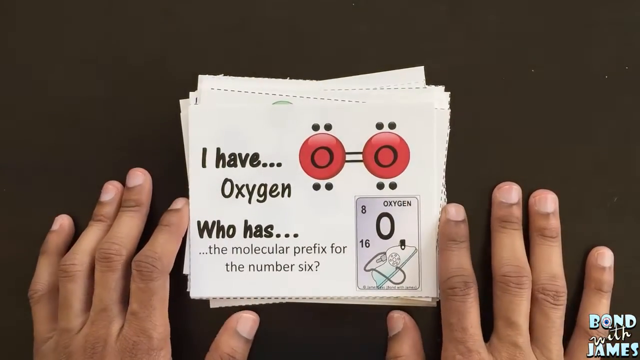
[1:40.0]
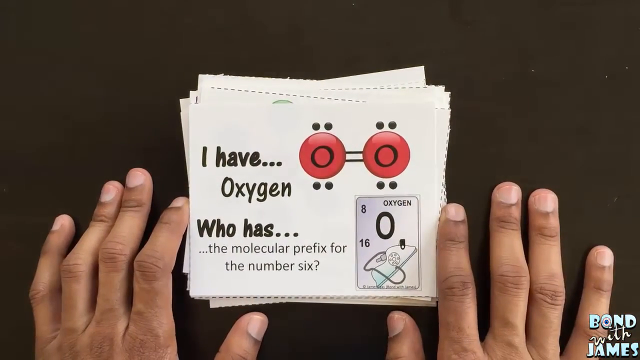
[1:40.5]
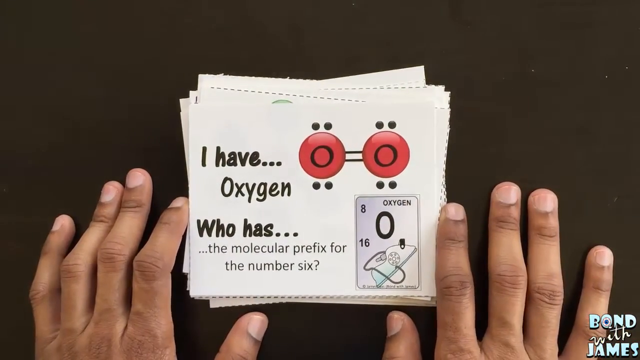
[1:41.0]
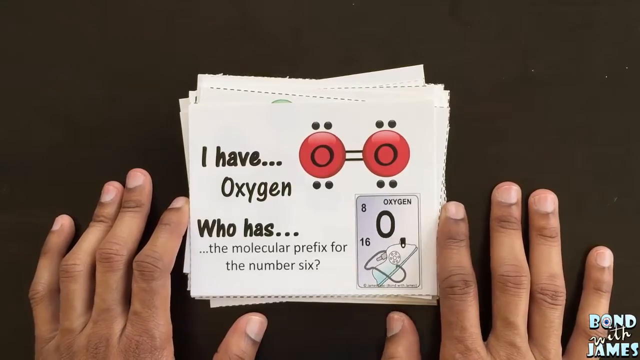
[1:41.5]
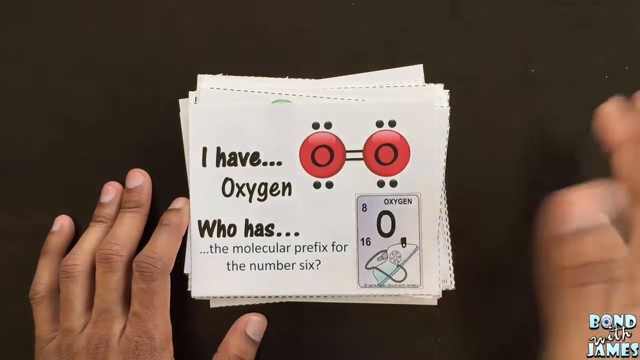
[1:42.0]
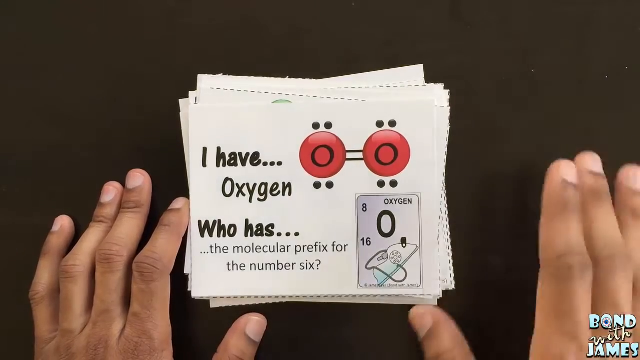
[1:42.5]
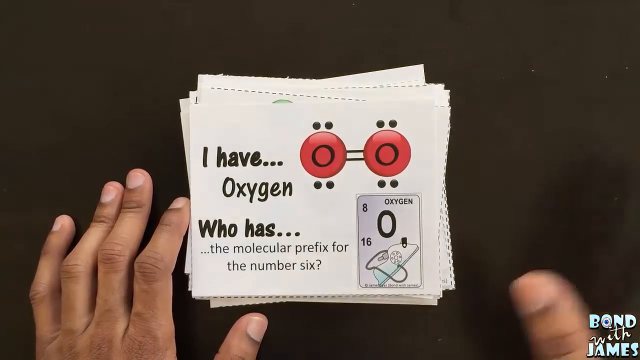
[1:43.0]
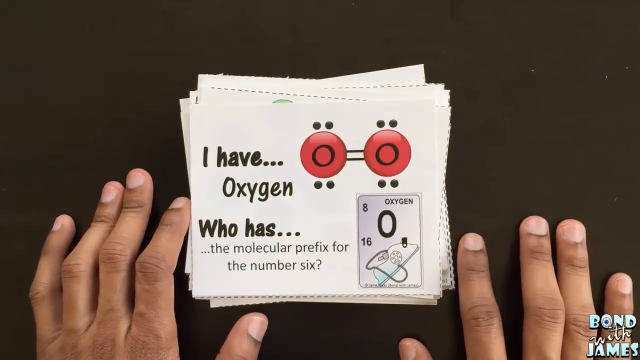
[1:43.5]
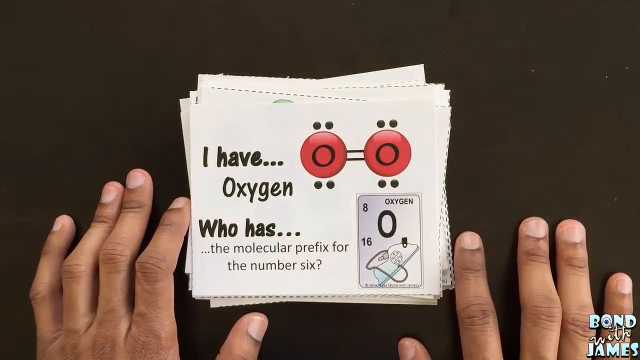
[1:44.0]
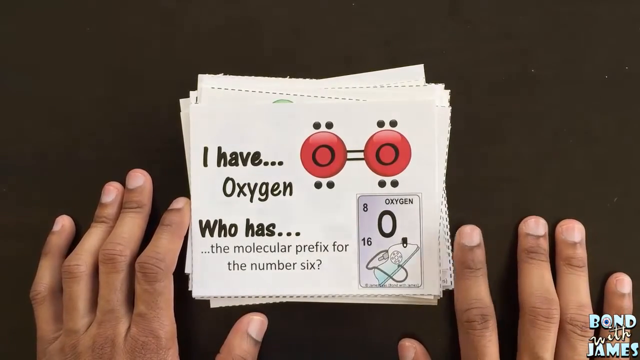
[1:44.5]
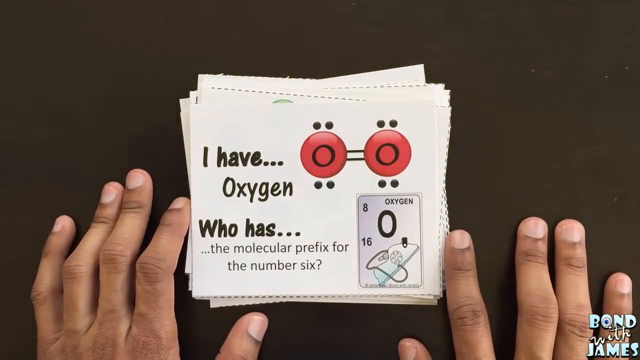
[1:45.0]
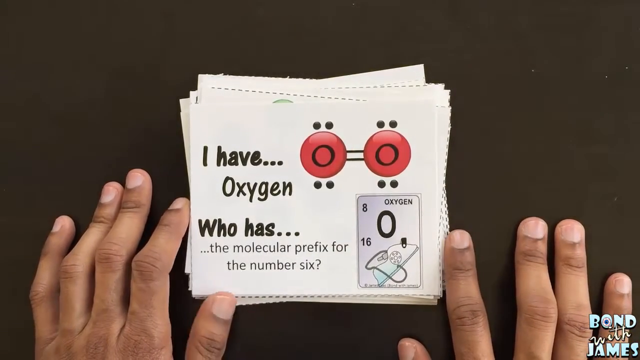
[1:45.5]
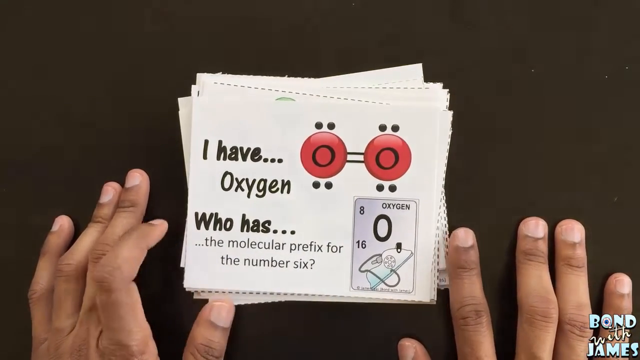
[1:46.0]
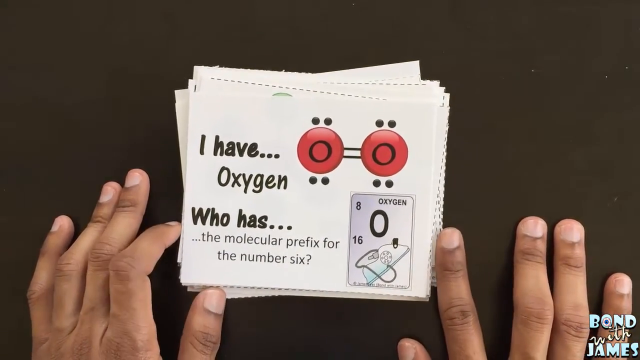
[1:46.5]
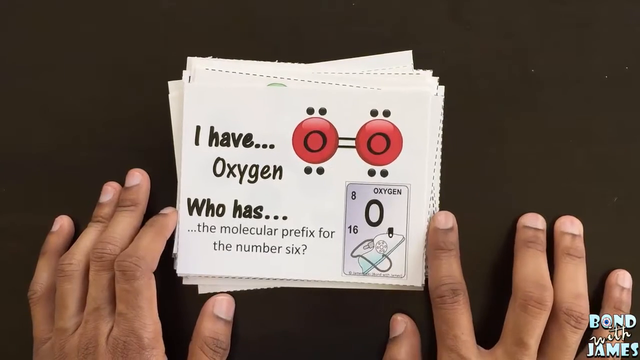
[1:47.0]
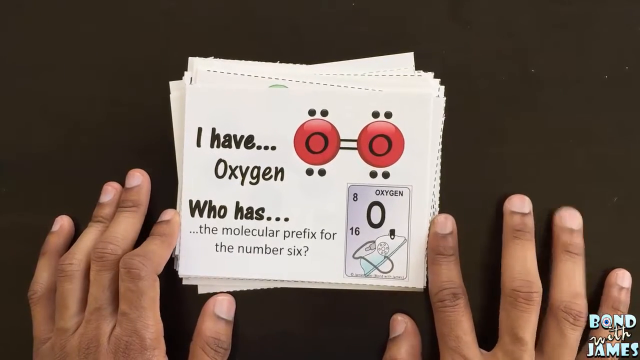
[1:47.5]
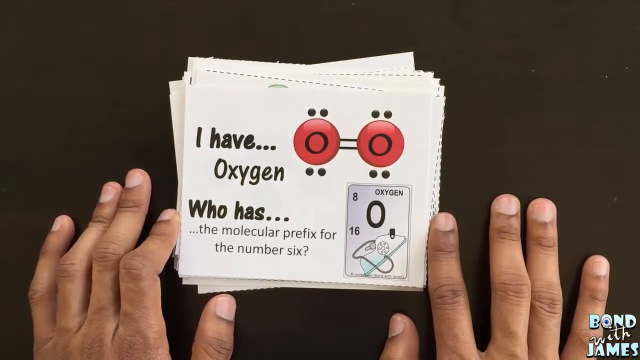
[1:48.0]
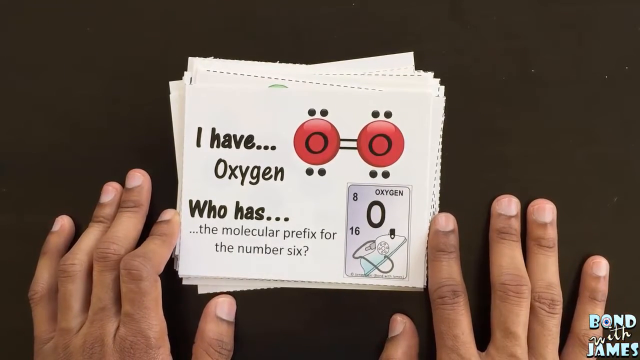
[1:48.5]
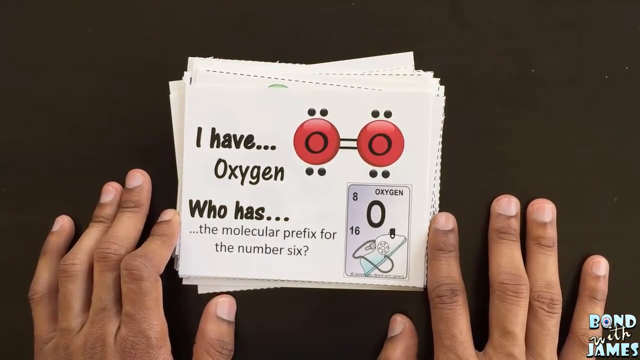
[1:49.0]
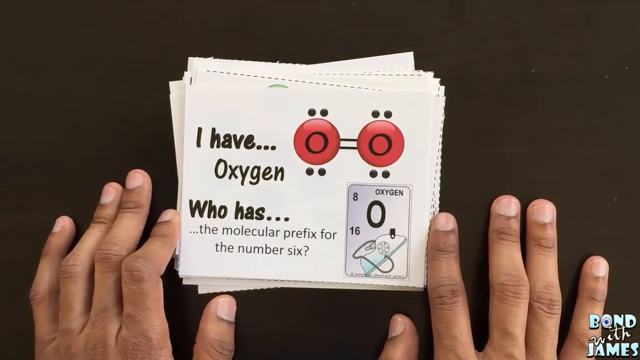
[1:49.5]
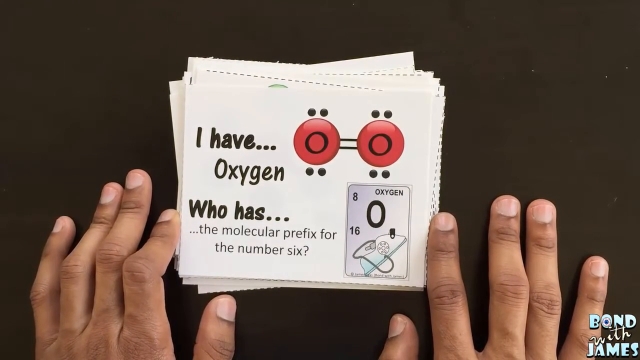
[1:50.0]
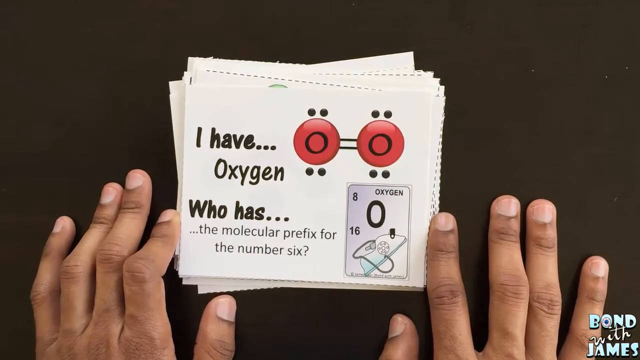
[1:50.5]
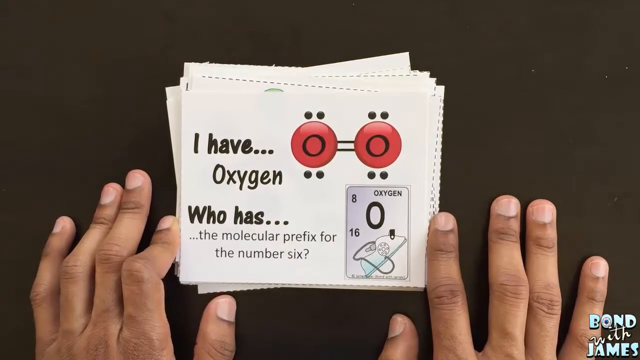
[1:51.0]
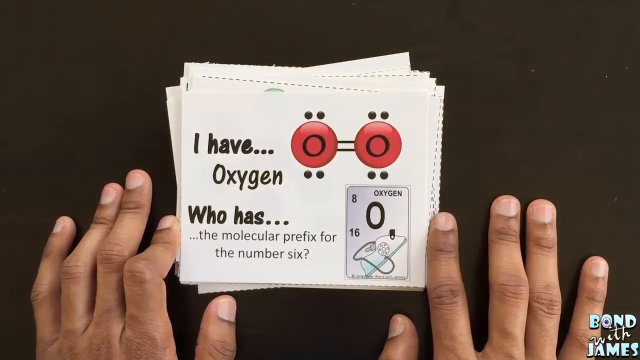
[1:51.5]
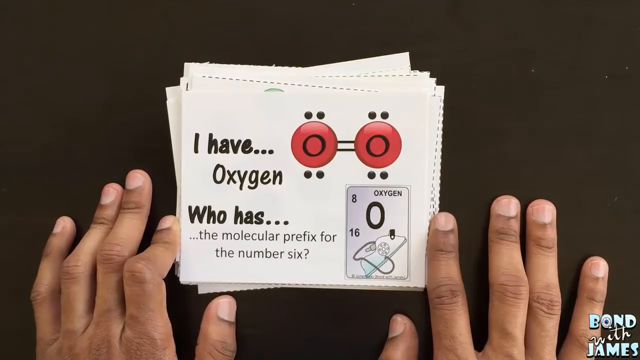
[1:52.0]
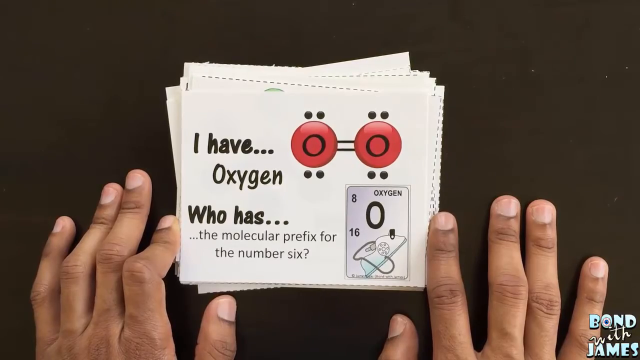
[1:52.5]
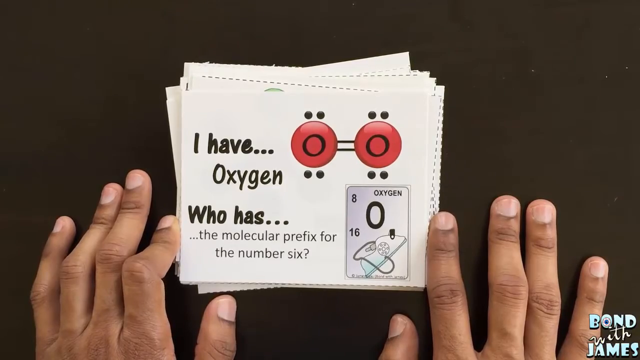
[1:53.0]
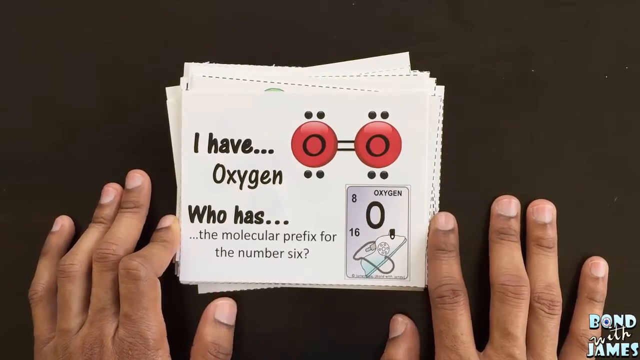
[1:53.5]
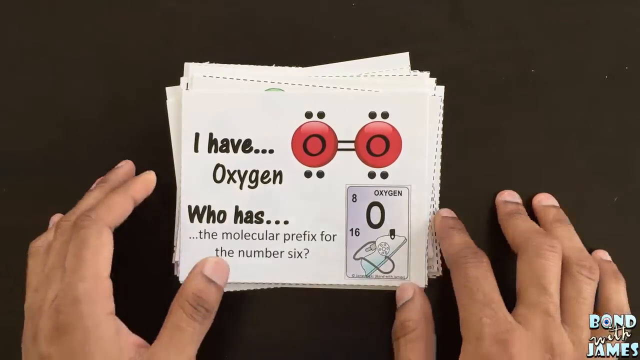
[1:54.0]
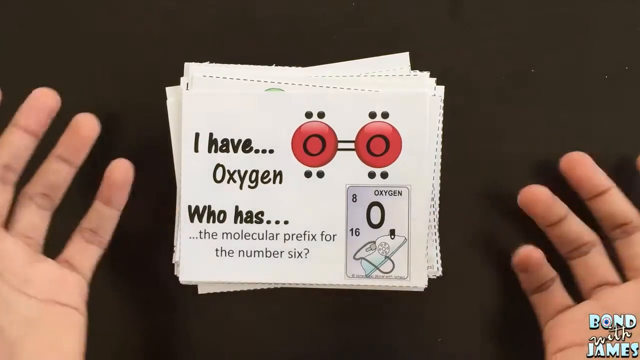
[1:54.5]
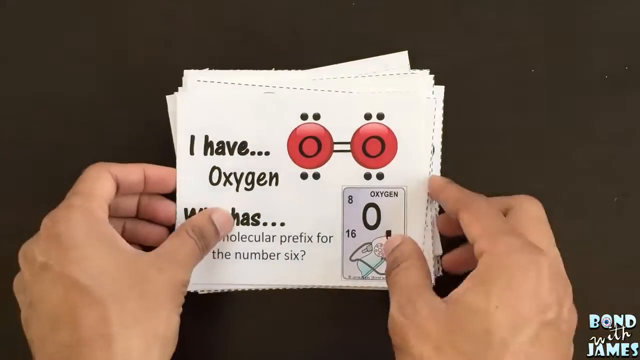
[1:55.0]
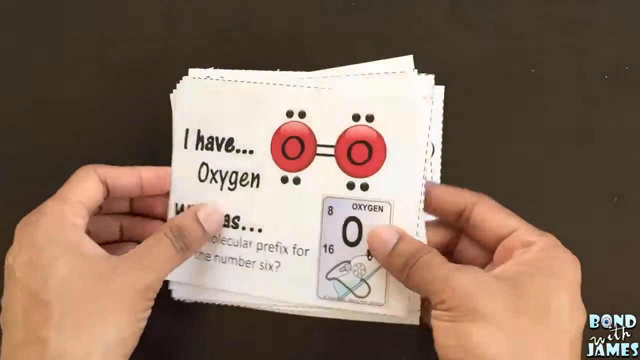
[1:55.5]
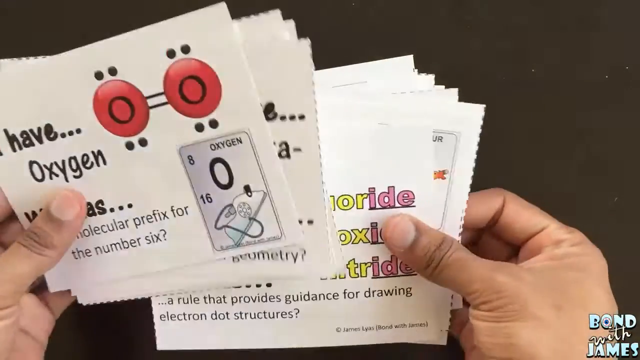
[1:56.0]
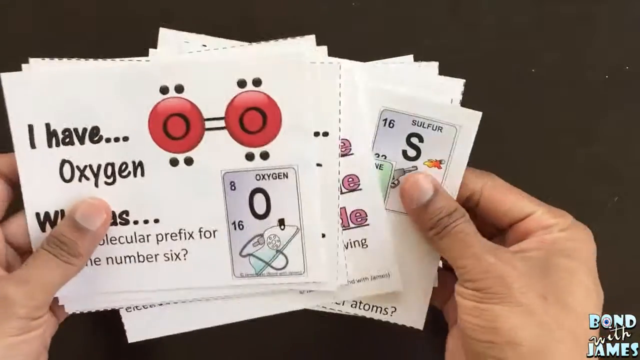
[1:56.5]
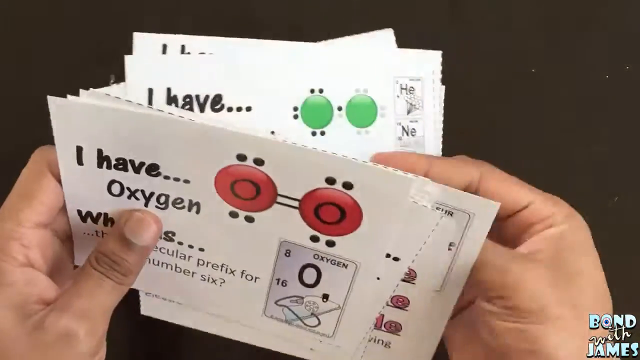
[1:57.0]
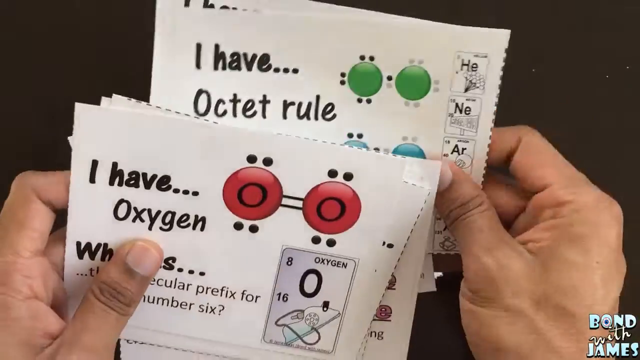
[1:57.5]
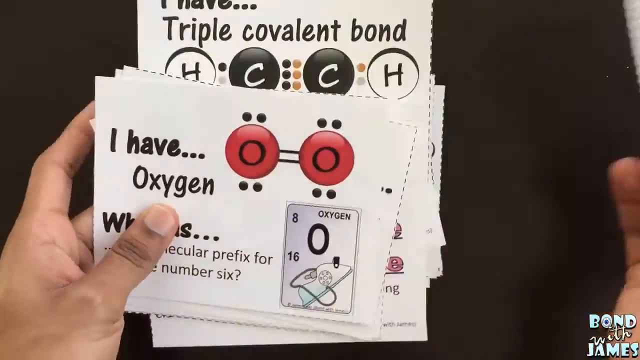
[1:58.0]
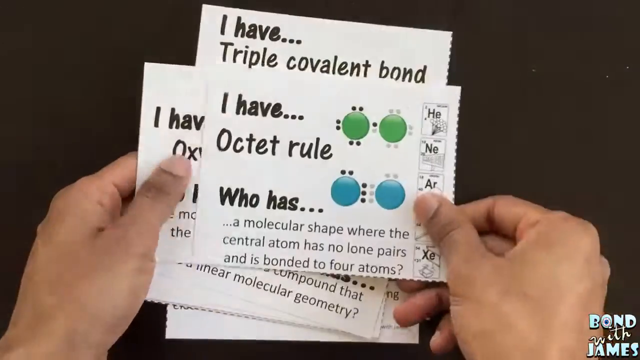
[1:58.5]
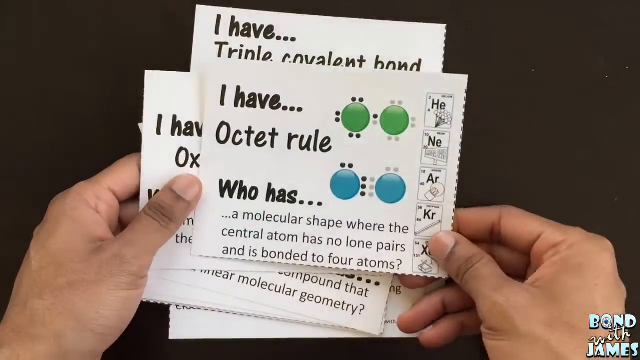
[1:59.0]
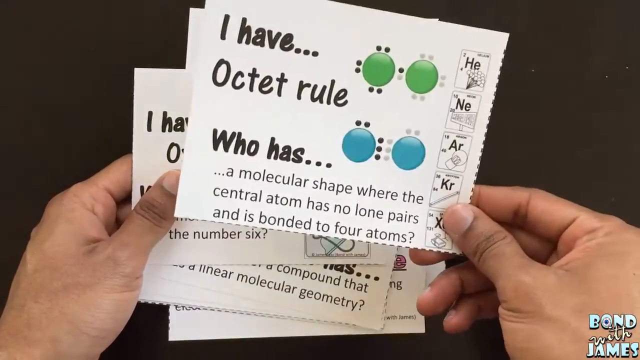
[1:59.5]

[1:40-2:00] The person's hands are placed face down on the table. The person raises the right hand, flips it, and puts it back face down on the table, flanked by the pack of cards. They make signs with both hands, shuffle through the cards, and bring out one card from beneath the pack. They keep gesturing and tap their hands on the table, flip through the cards, and pick one that reads "I have octet rule." It has two molecular symbols in green: one has two black dots and the other has two gray dots. Below "I have octet rule" are blue molecular symbols with dotted lines: one has two dotted lines on top and three black dotted lines at the side, while the other has three gray dotted lines at the side and two gray dotted lines at the top. In blue, the card also reads "a molecular shape where the central atom has no lone pairs and is bonded to four atoms," with other molecular symbols beside it.